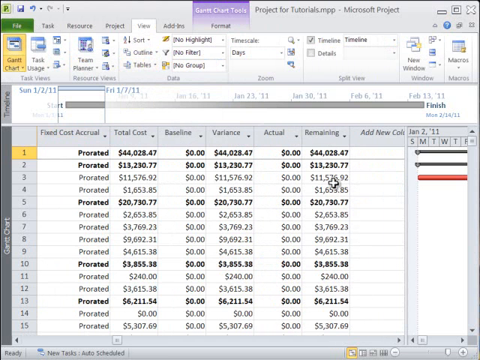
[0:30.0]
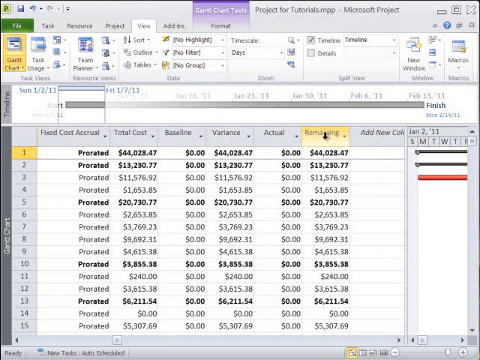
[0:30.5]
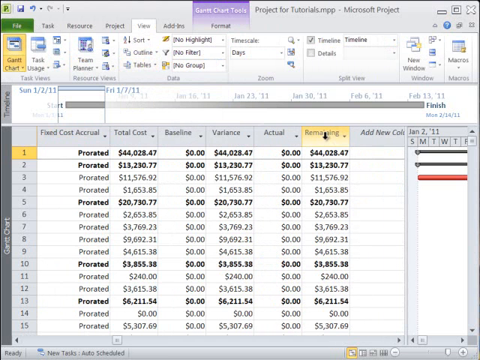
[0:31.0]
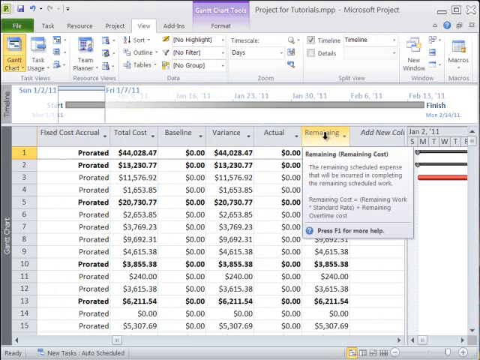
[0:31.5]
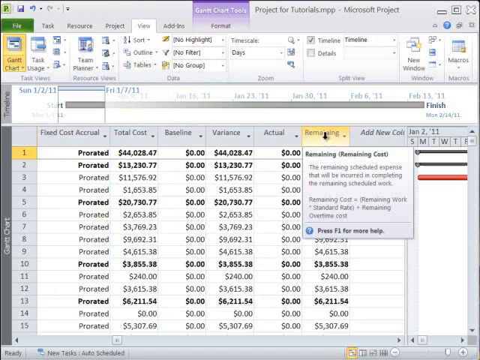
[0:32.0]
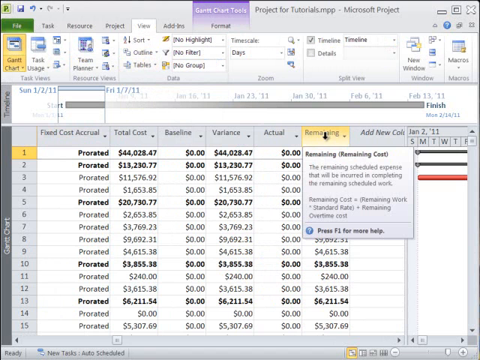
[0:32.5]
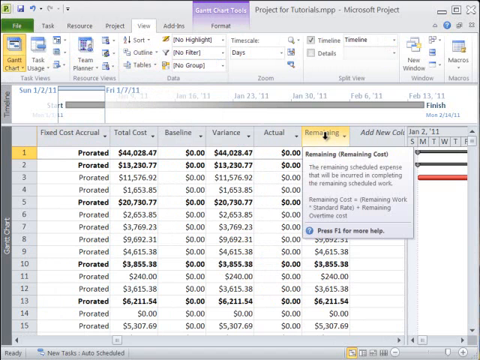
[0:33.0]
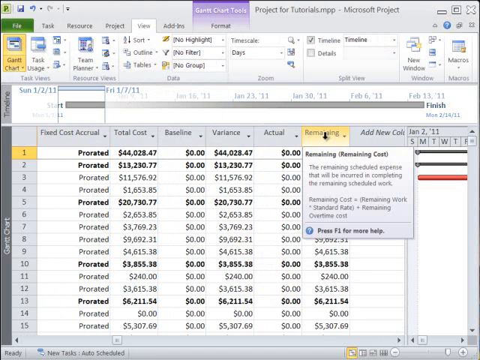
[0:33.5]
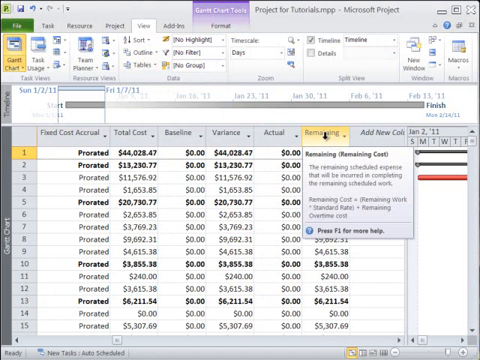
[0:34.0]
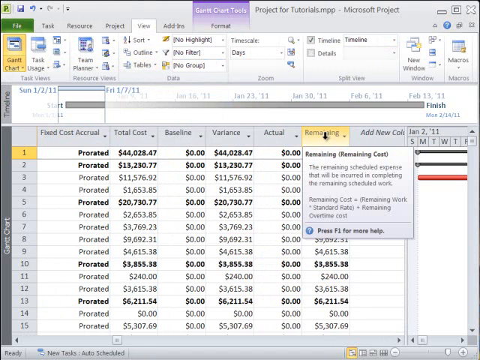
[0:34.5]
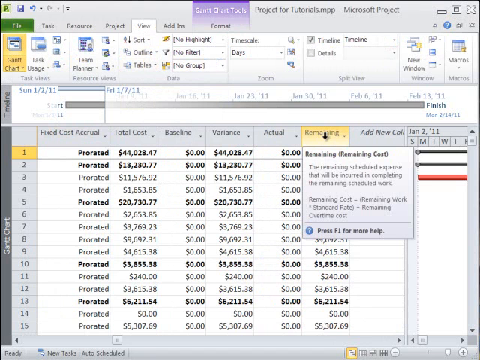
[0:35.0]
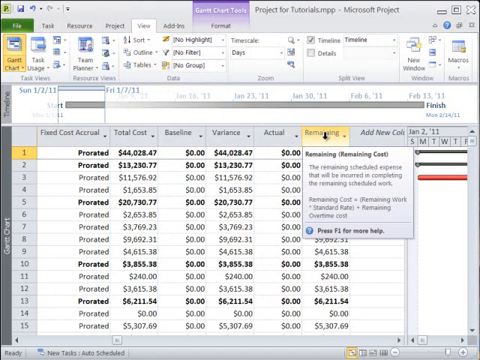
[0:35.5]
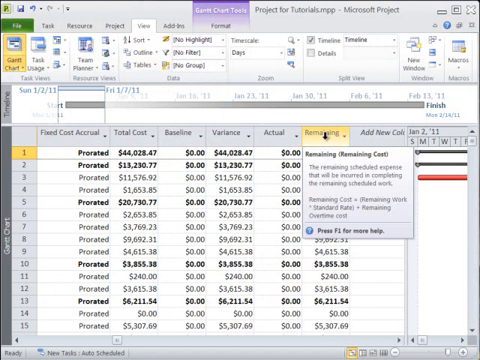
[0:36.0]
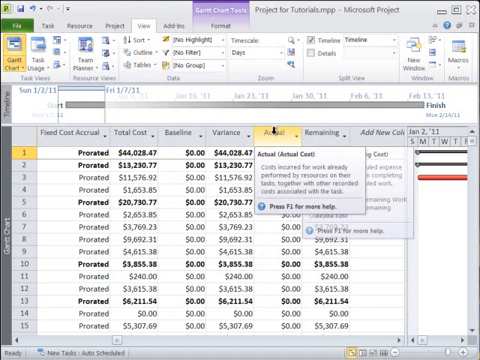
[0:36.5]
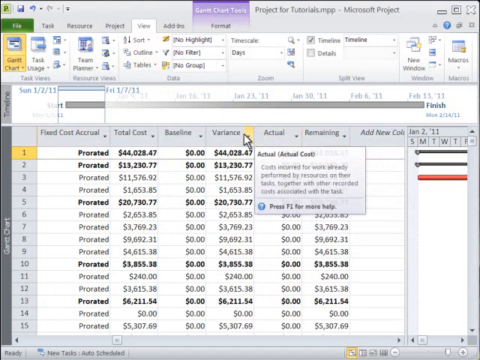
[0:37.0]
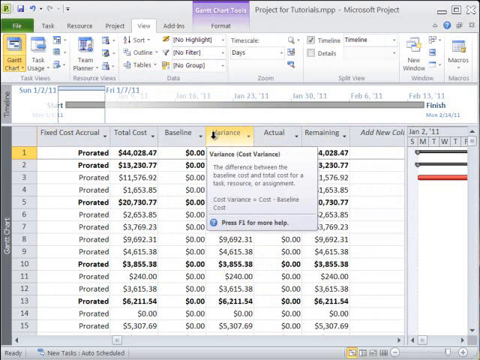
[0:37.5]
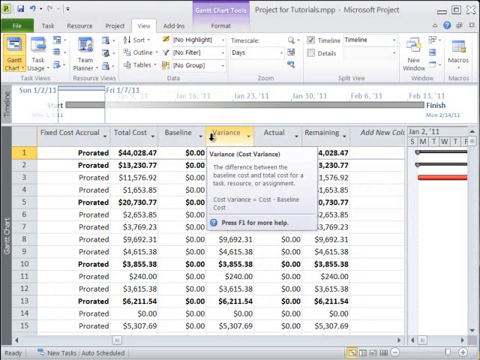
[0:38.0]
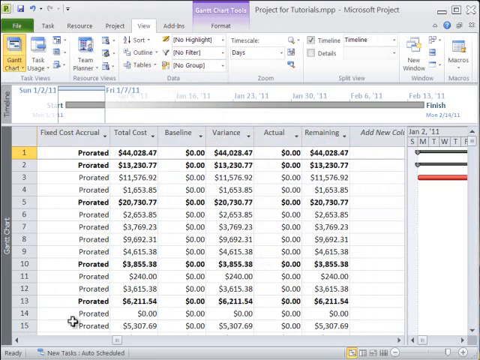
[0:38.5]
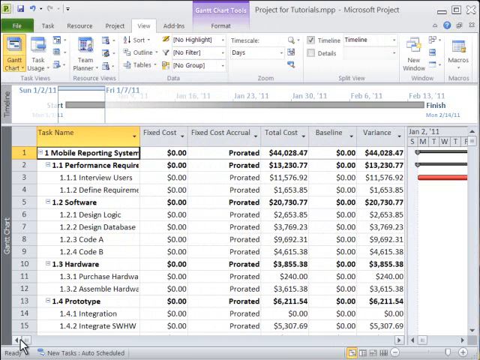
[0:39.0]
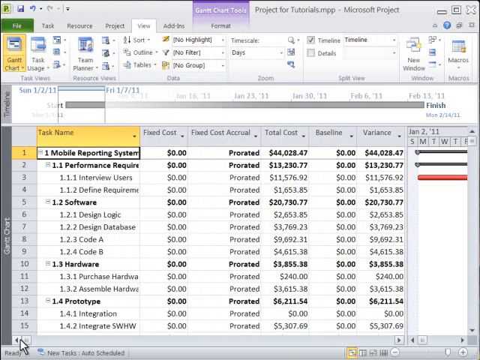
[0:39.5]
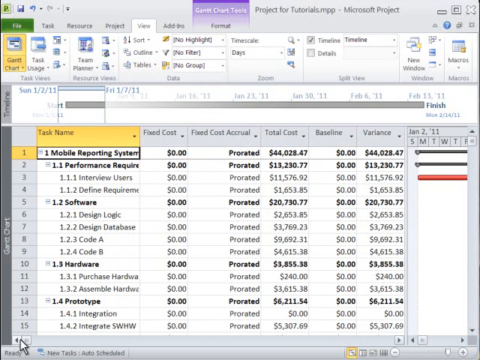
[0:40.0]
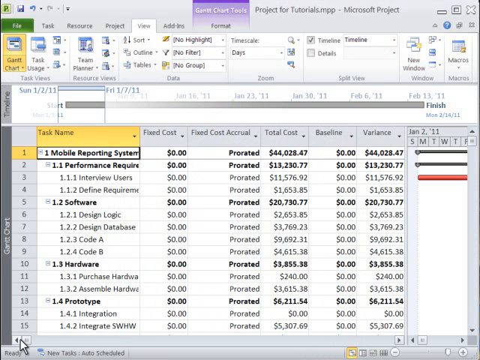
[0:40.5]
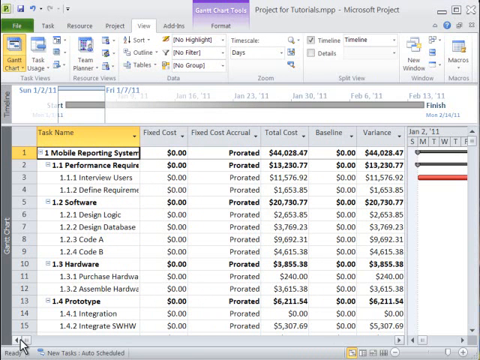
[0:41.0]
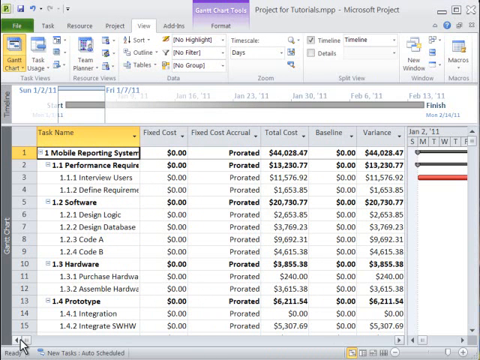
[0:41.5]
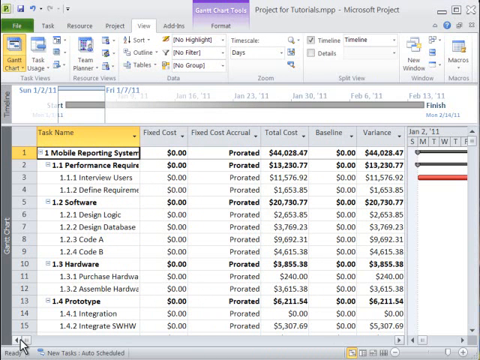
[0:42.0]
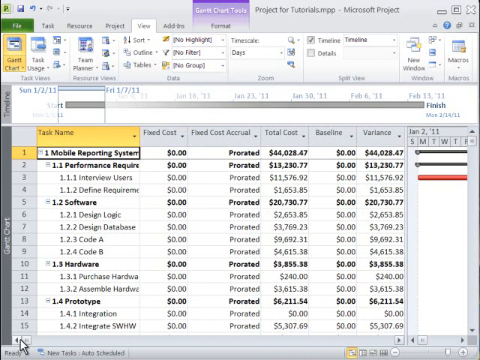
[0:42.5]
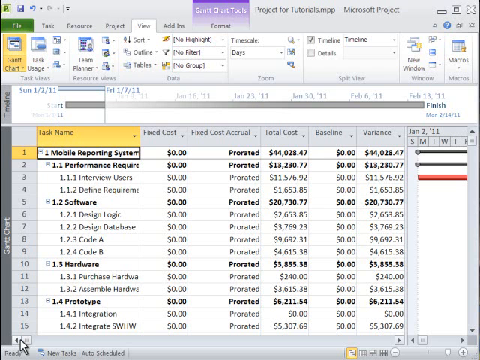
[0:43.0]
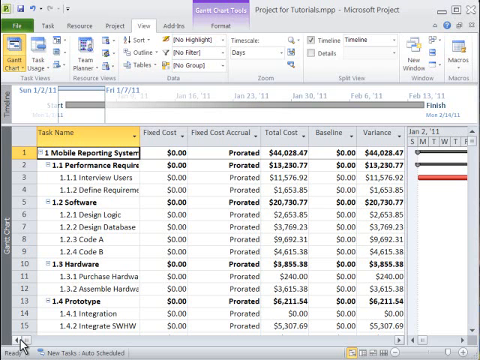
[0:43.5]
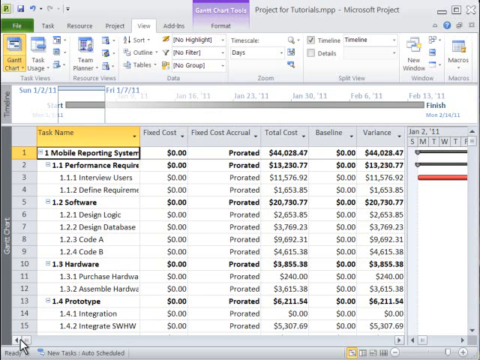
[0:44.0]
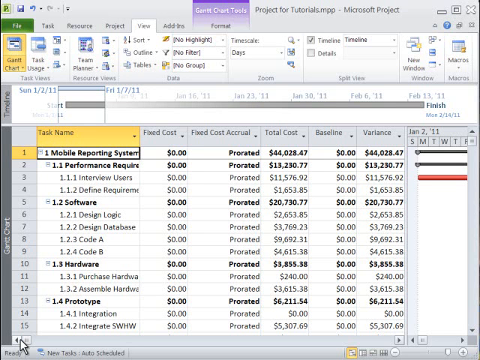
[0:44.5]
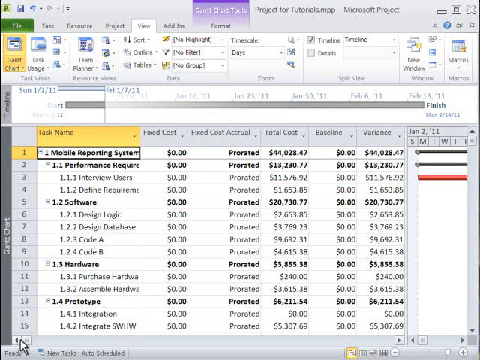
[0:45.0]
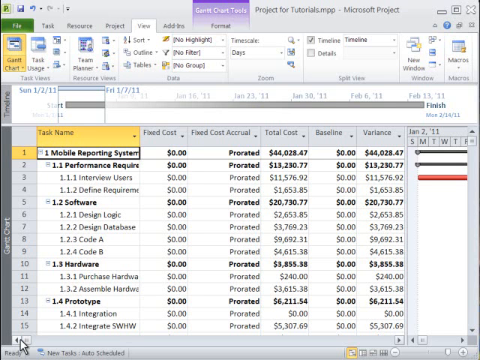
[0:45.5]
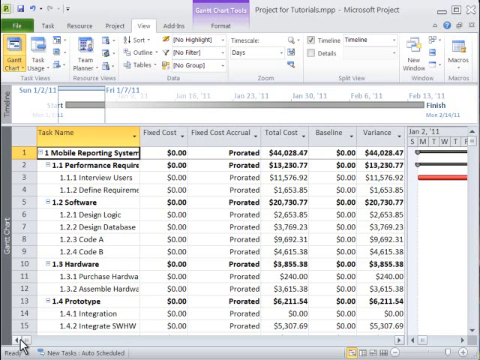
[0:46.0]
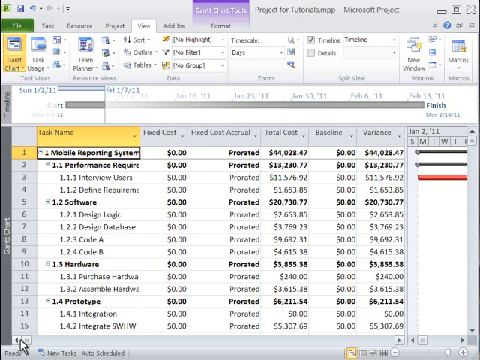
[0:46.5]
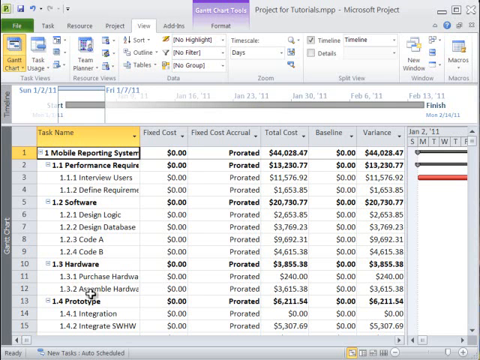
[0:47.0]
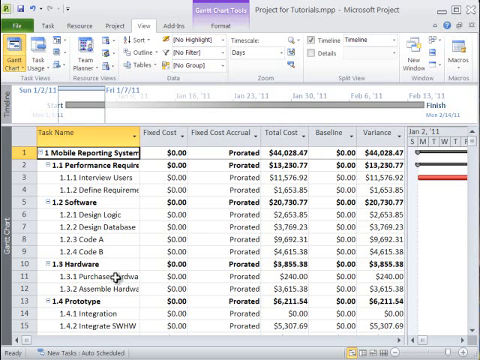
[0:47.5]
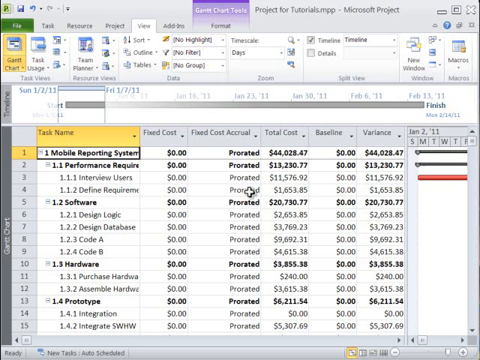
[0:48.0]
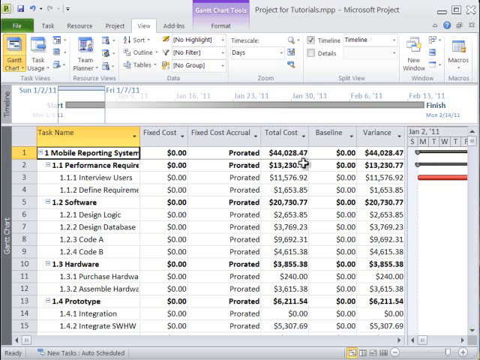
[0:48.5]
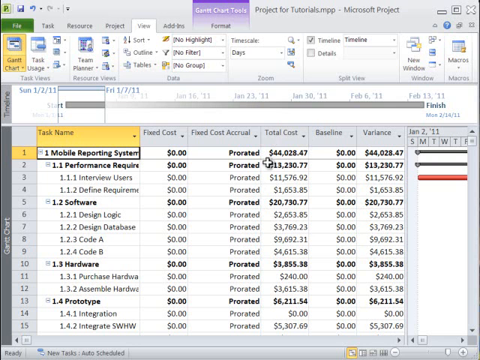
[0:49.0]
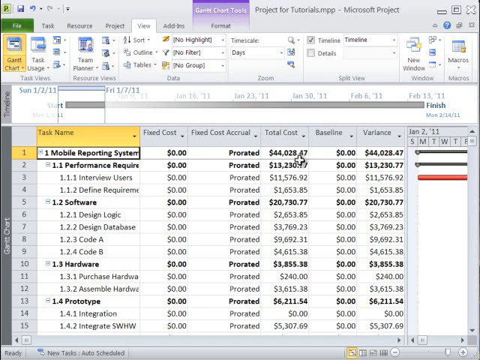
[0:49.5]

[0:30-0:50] The view is back on the spreadsheet itself, apparently looking at the remaining cost and going over variance. Columns include task name, fixed cost, fixed cost accrual, total cost and baseline variance, and the view cycles through the columns. "Prorated" appears under fixed cost accrual. One column shows zero under baseline. The total cost is visible at the top, along with the variance and the actual, which are all zero, and the remaining.